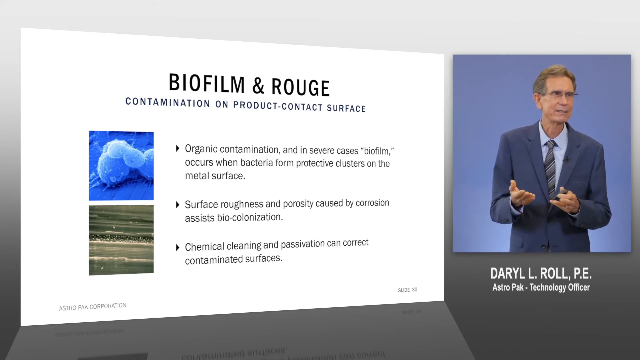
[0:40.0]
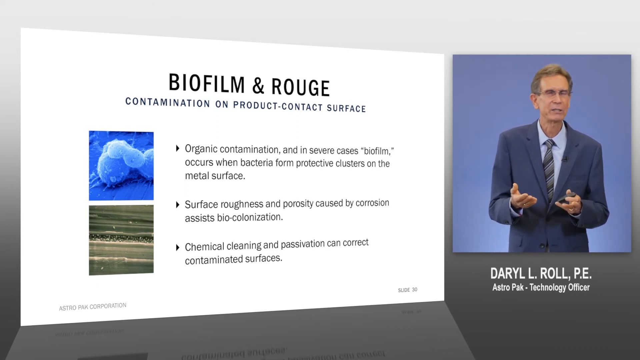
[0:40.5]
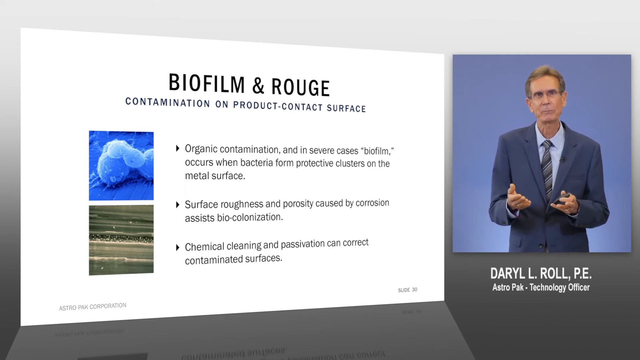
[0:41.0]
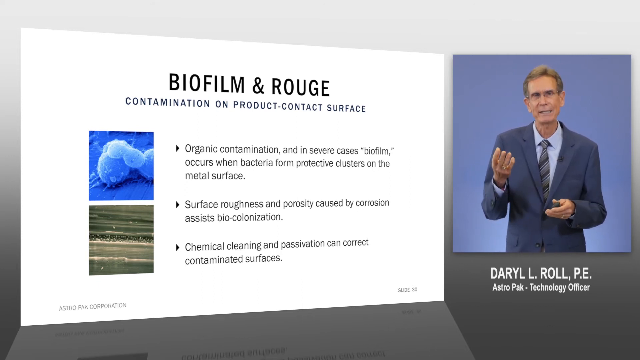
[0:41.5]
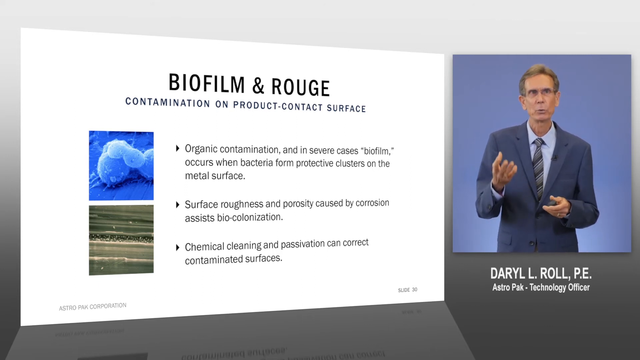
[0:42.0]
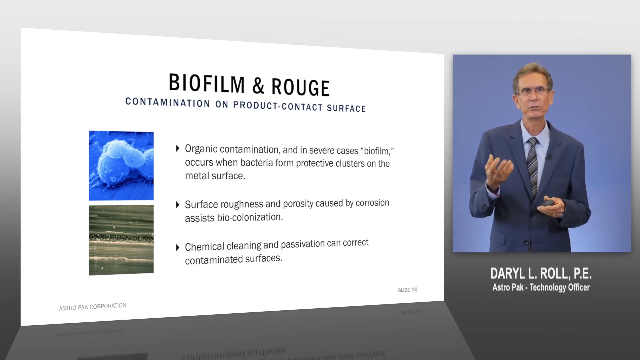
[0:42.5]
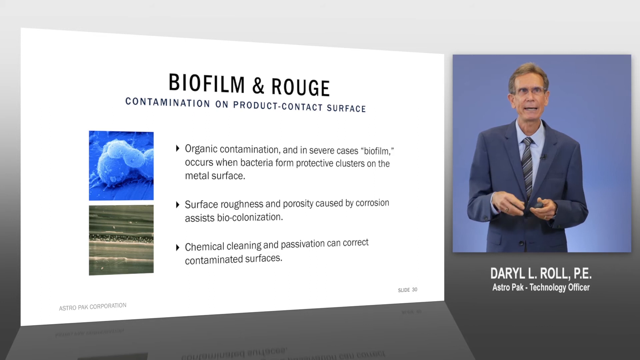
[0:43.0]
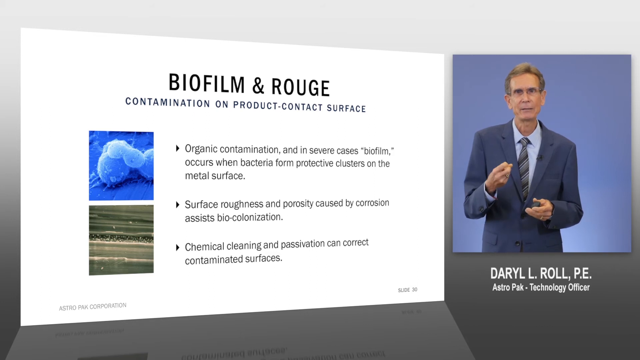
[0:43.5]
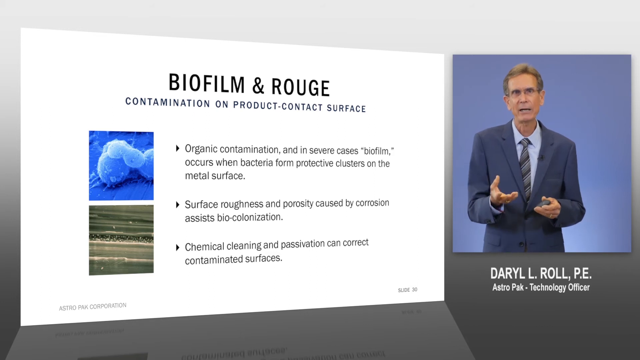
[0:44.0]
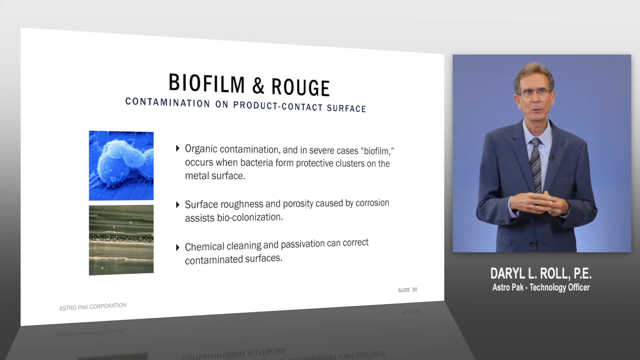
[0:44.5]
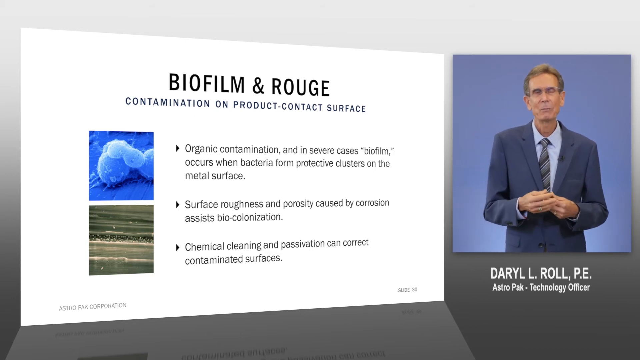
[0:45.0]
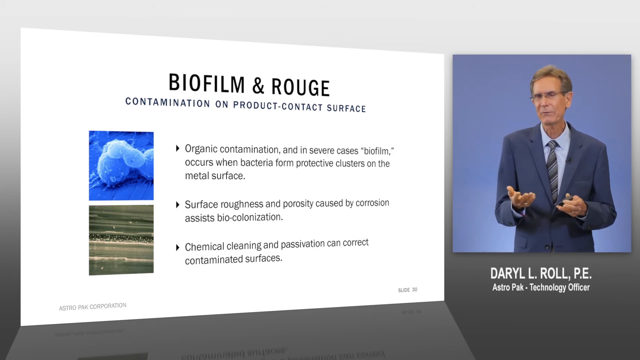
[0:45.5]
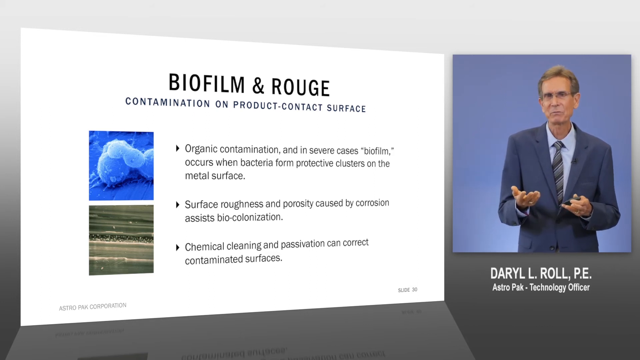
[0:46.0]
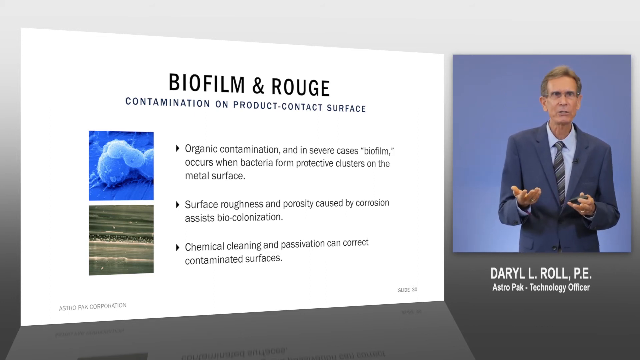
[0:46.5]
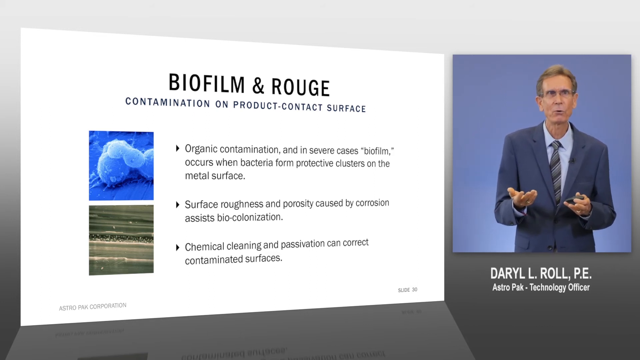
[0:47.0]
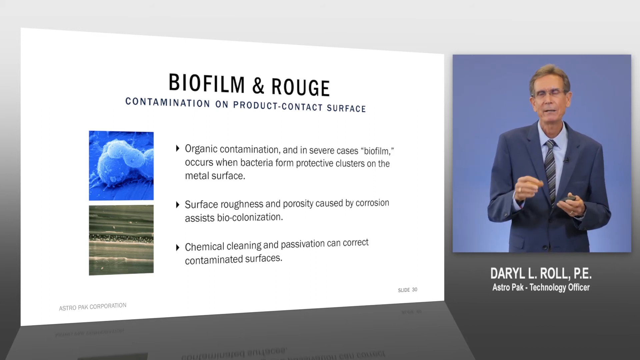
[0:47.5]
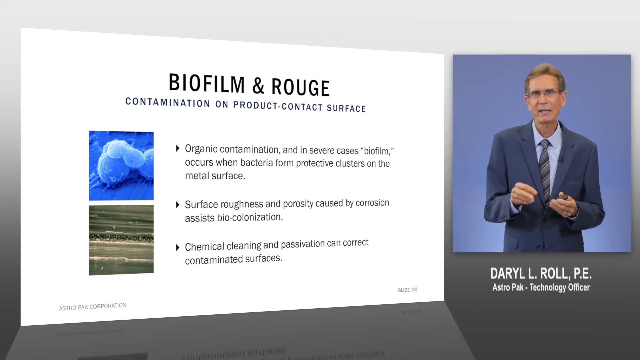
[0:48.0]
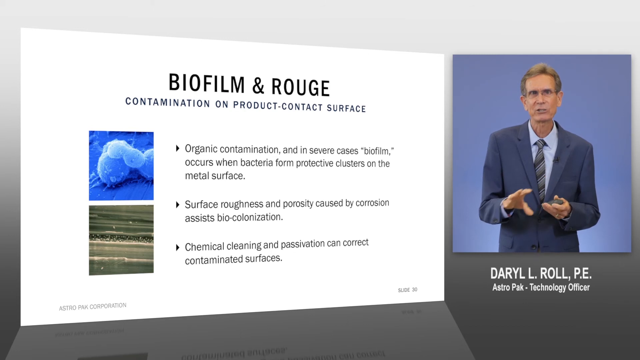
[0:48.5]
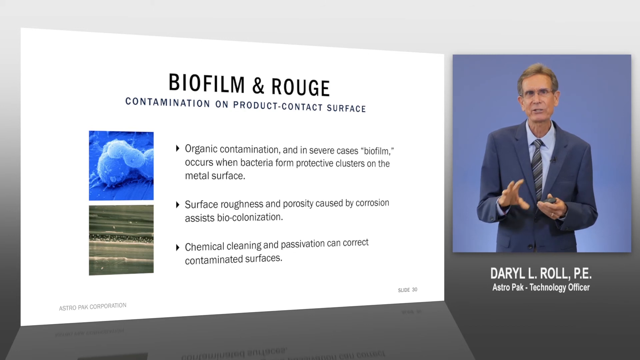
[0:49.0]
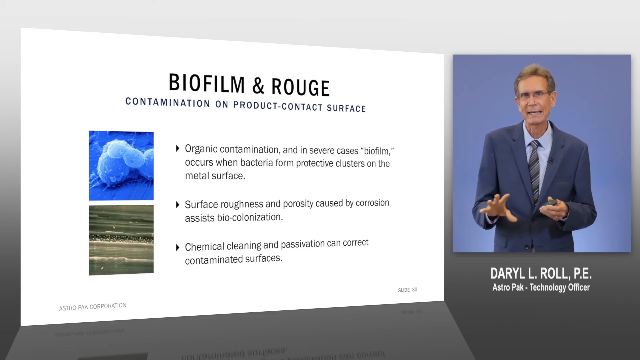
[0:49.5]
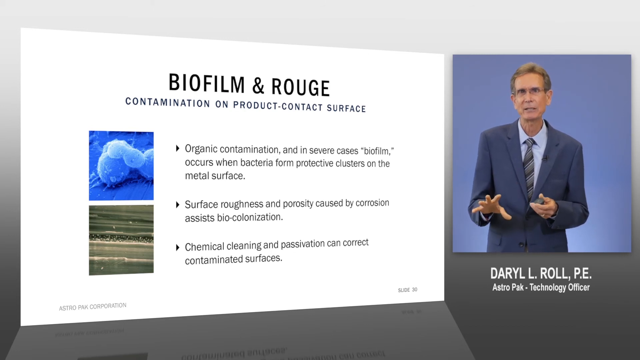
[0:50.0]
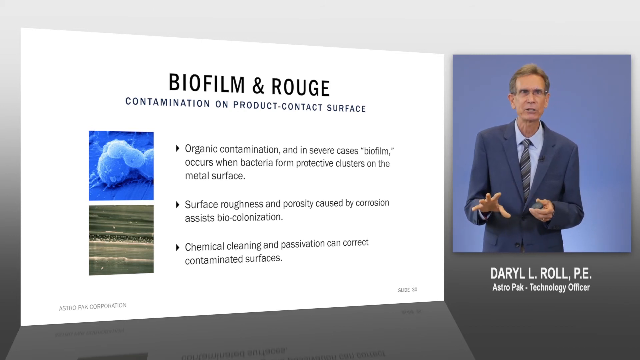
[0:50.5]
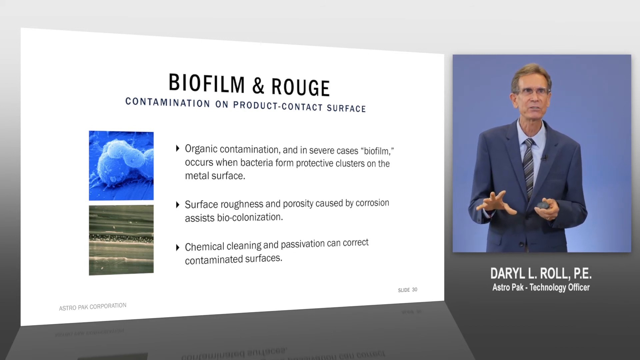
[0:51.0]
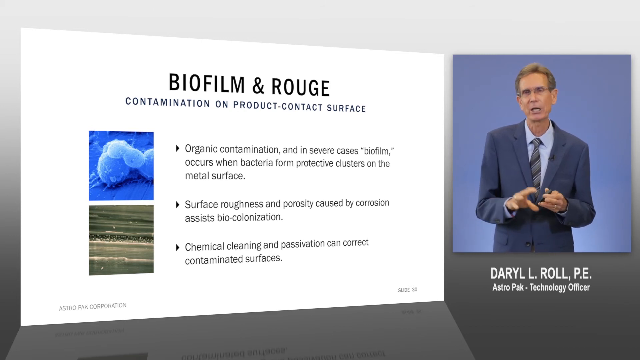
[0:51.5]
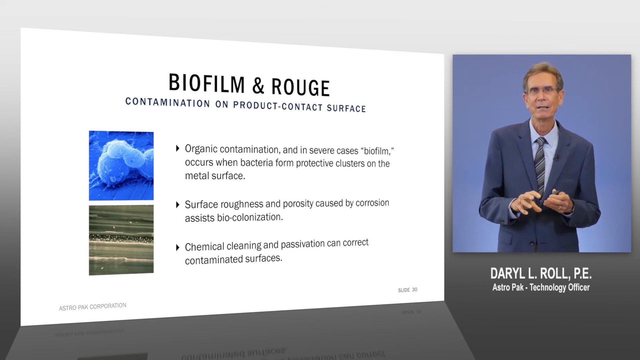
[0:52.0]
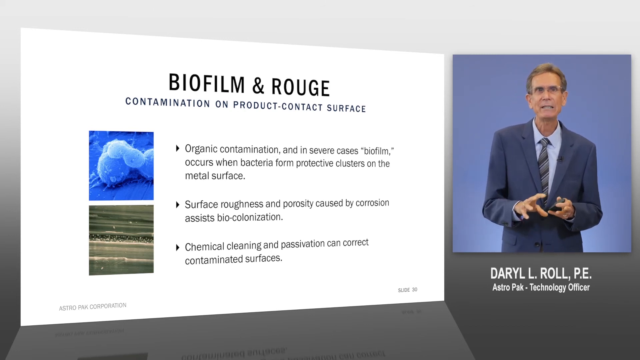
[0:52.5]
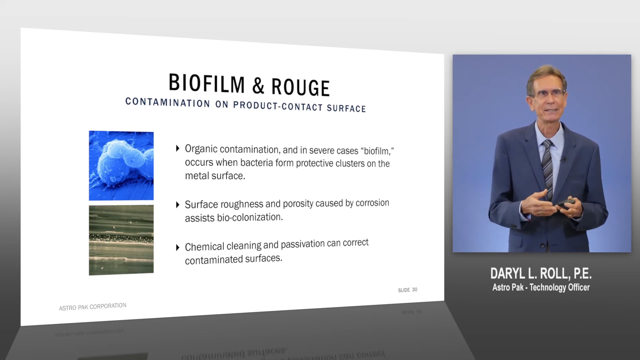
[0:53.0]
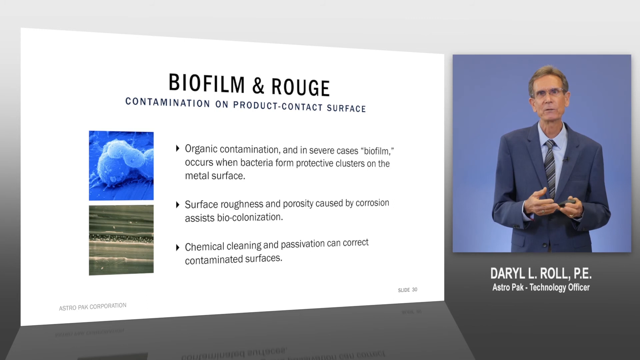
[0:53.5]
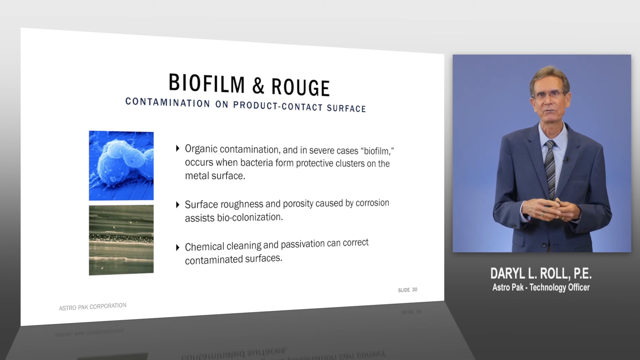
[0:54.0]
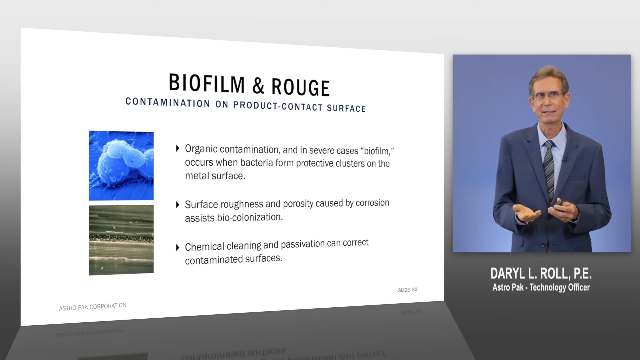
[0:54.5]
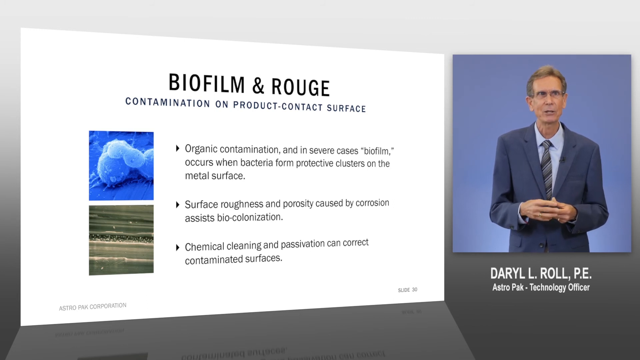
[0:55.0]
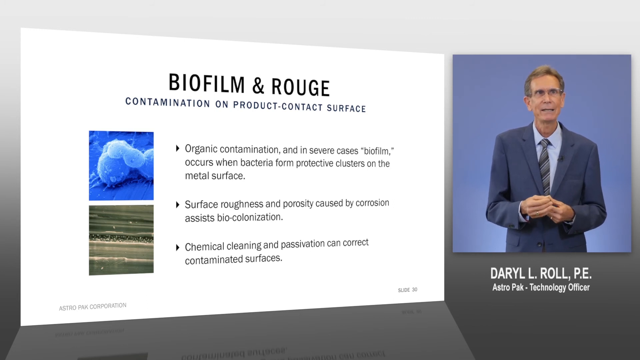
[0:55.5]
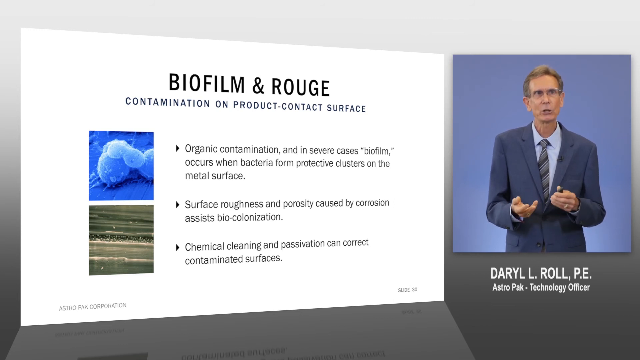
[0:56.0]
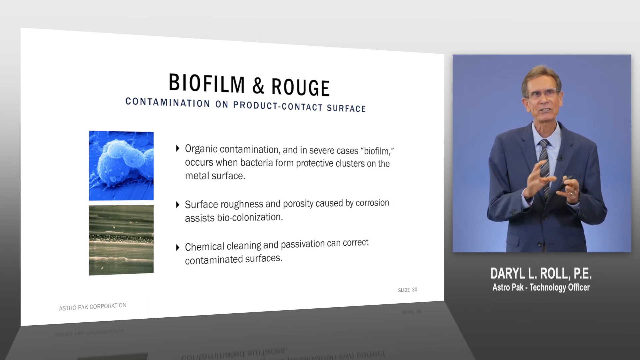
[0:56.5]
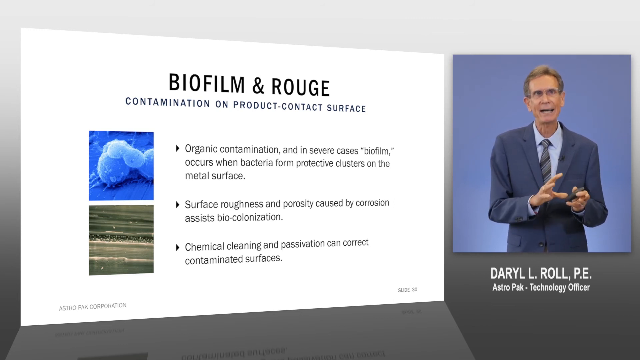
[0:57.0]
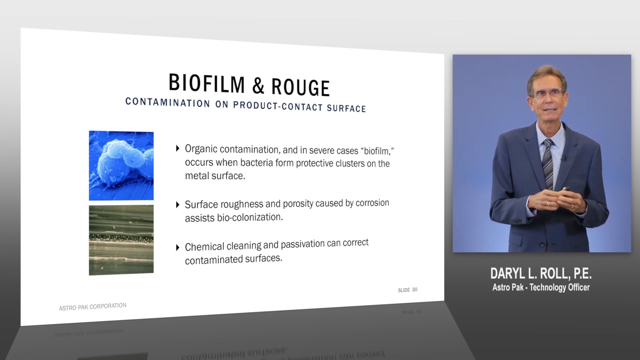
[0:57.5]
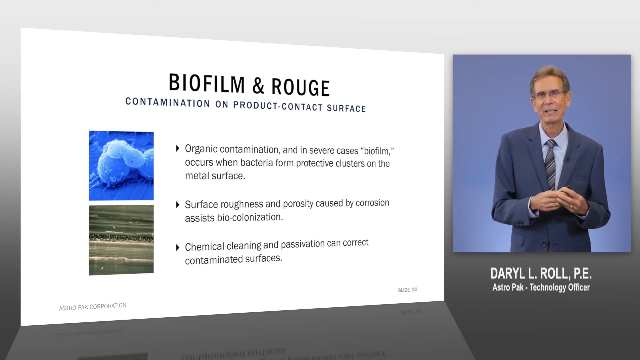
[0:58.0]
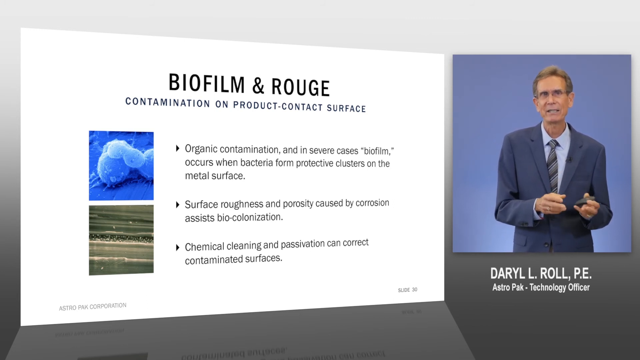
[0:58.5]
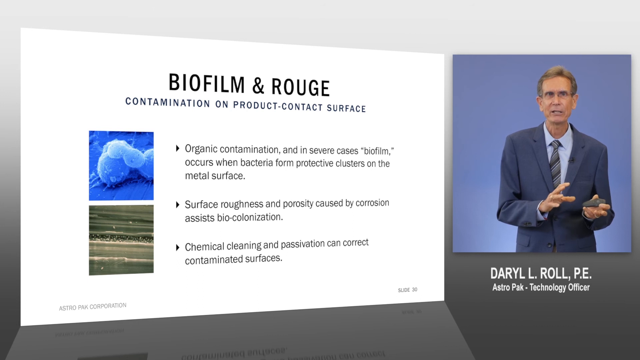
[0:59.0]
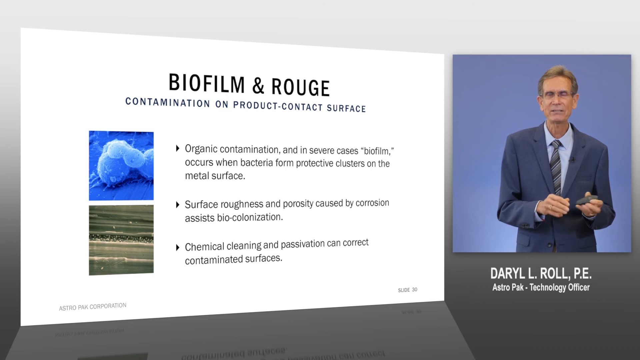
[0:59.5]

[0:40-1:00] A man named Darin, a technology officer of Astro Pak, appears on the right side of the screen in a video of him, while notes about biofilm and rogue in black font on a white background fill the left side. He moves his hands as he talks and wears a navy suit, a powder blue shirt and a formal tie. He moves and looks to the side as if explaining to an audience. Only the officer and the notes are displayed; the earlier question about the correlation is no longer shown.